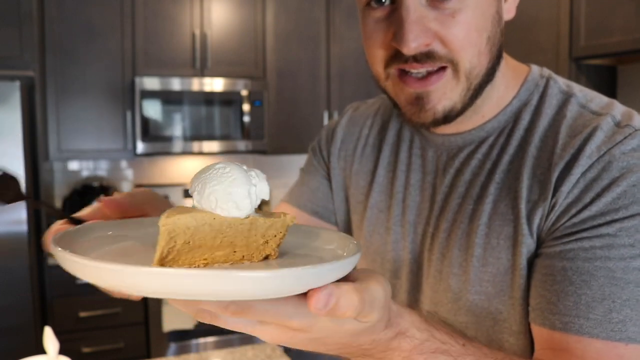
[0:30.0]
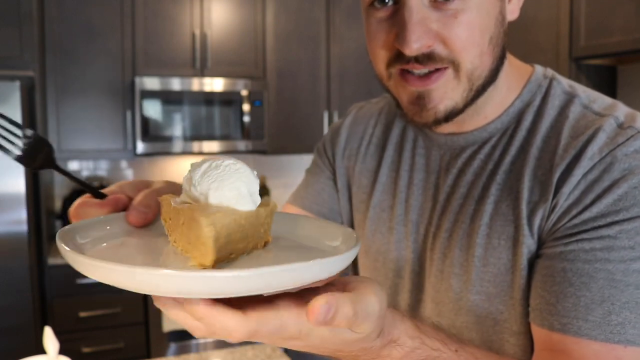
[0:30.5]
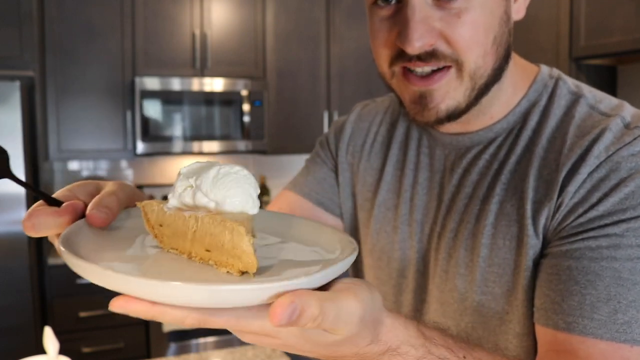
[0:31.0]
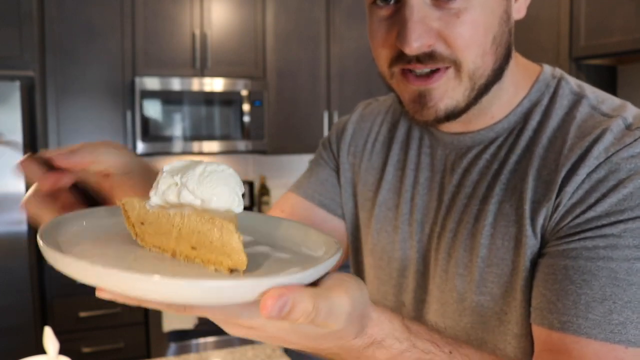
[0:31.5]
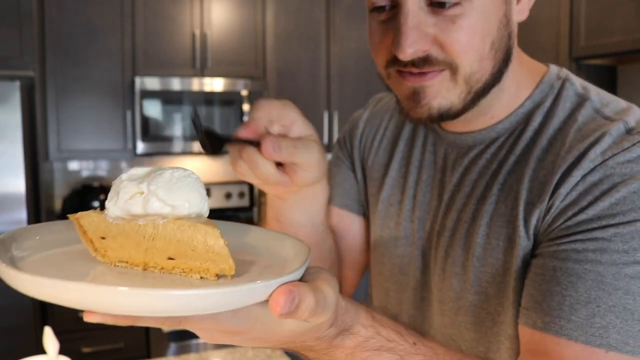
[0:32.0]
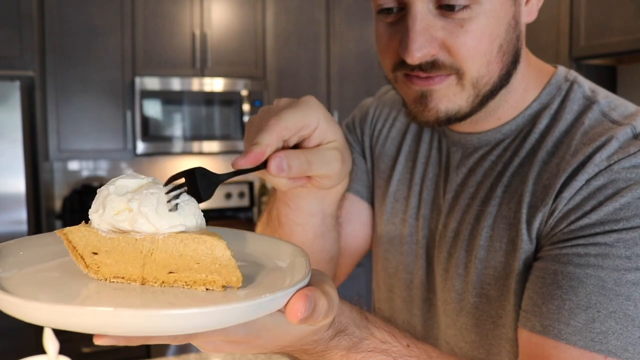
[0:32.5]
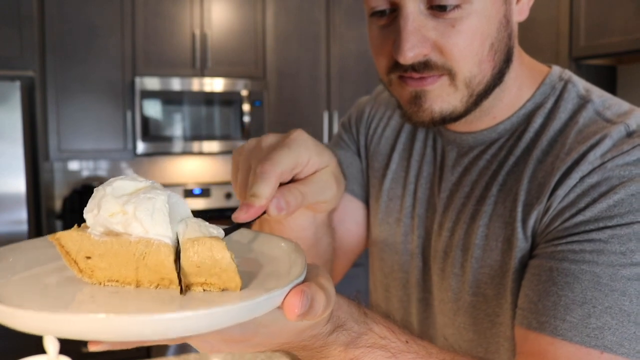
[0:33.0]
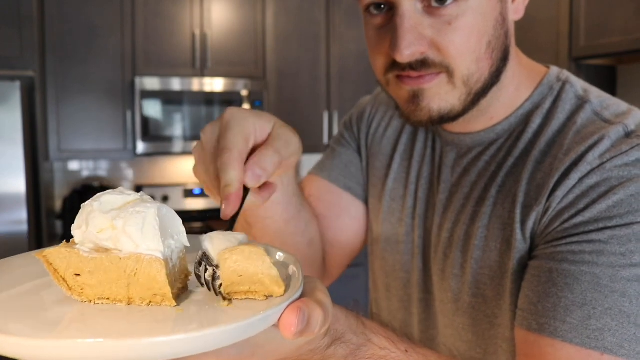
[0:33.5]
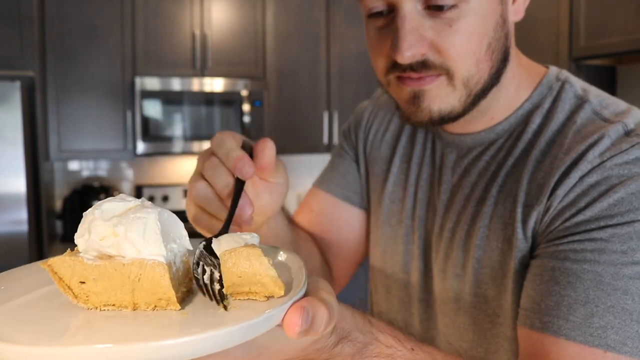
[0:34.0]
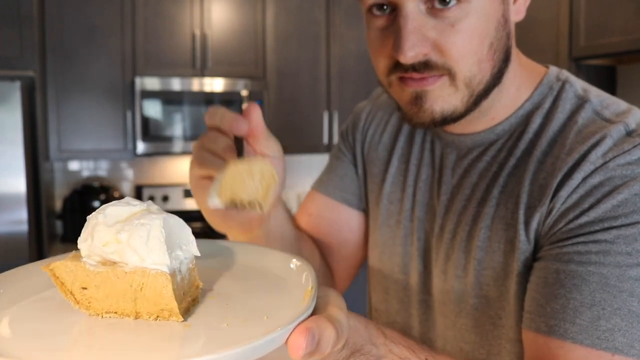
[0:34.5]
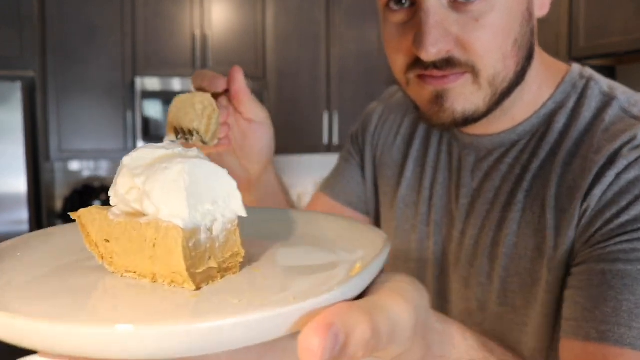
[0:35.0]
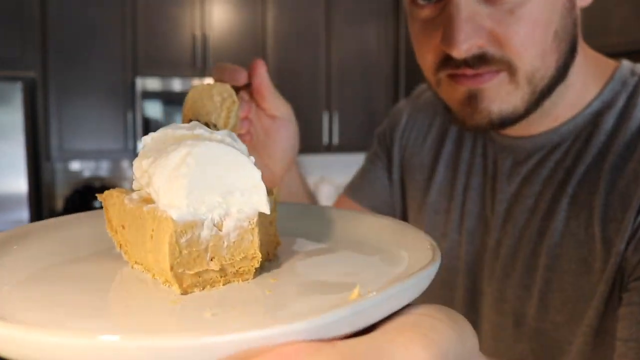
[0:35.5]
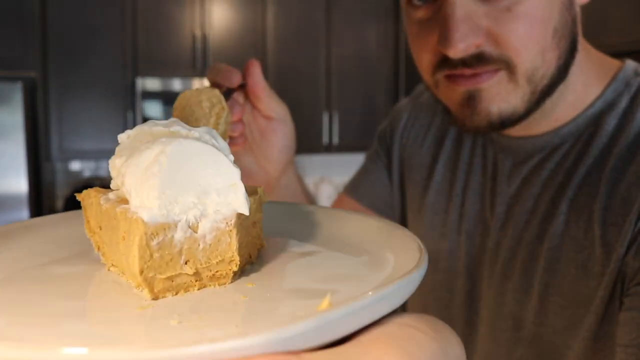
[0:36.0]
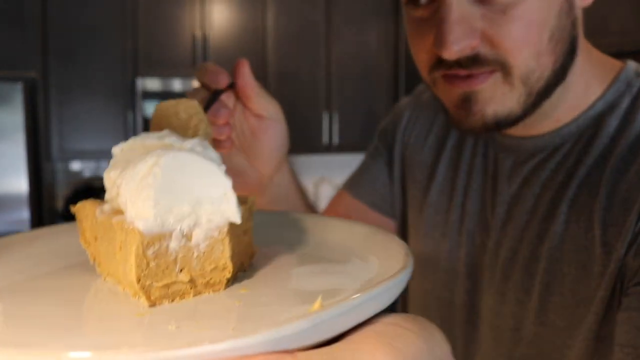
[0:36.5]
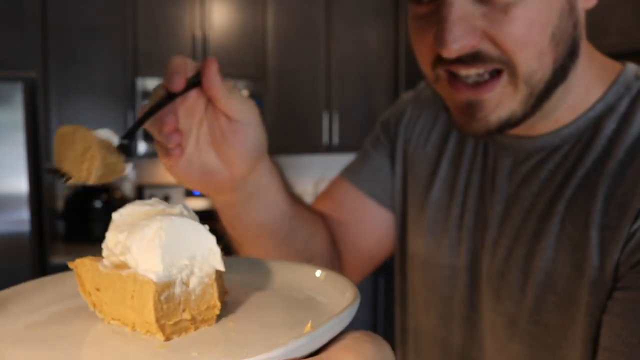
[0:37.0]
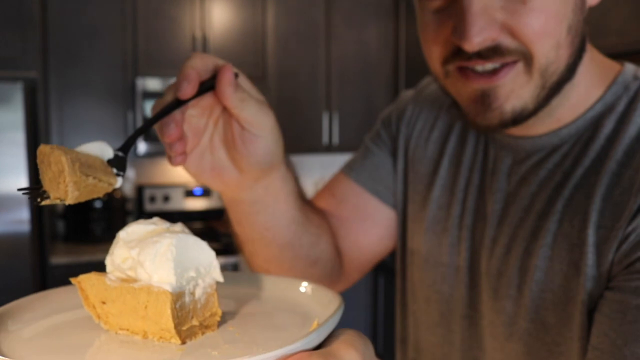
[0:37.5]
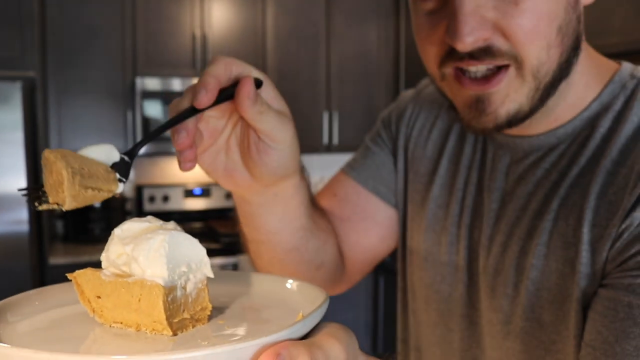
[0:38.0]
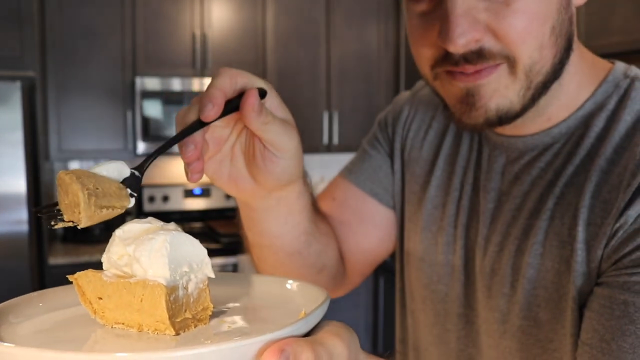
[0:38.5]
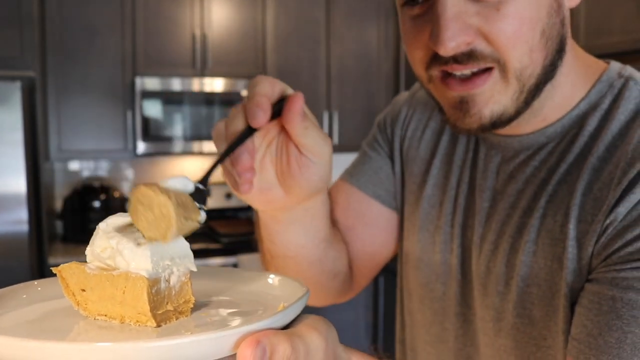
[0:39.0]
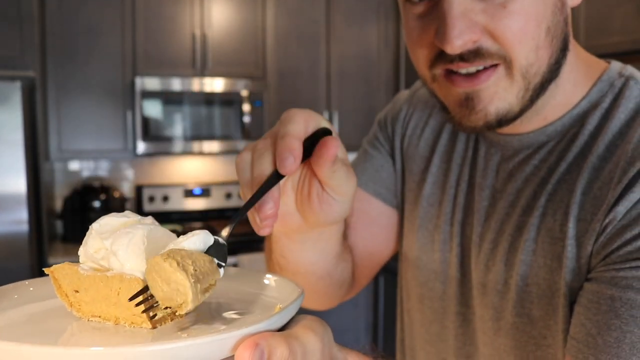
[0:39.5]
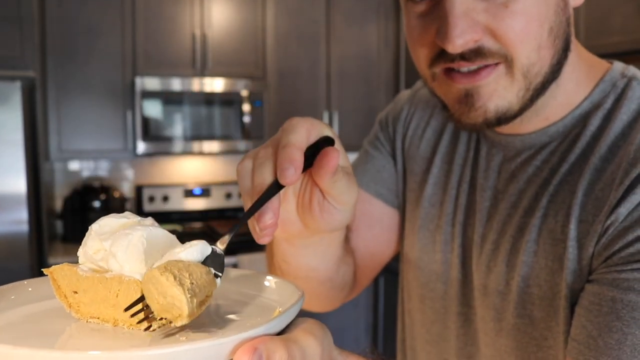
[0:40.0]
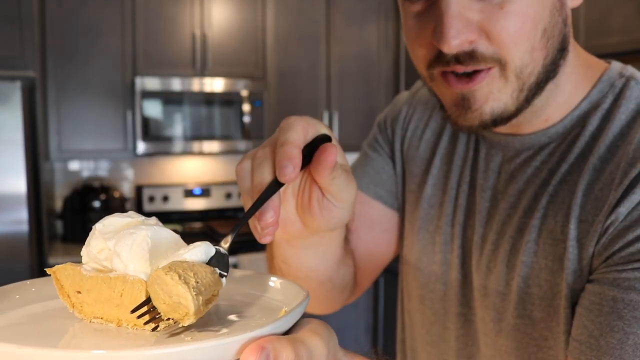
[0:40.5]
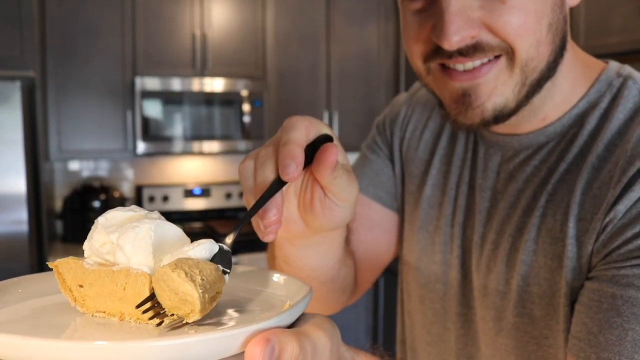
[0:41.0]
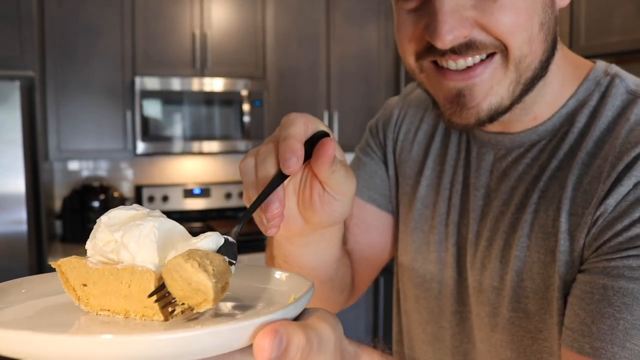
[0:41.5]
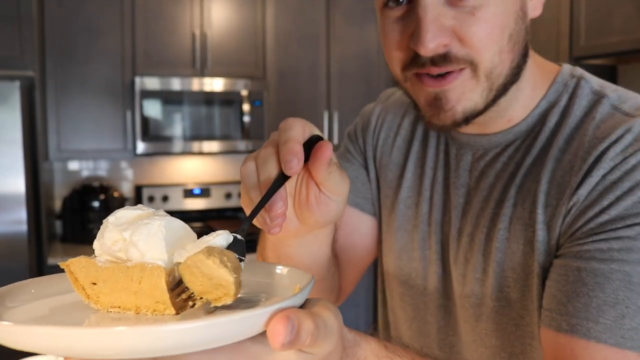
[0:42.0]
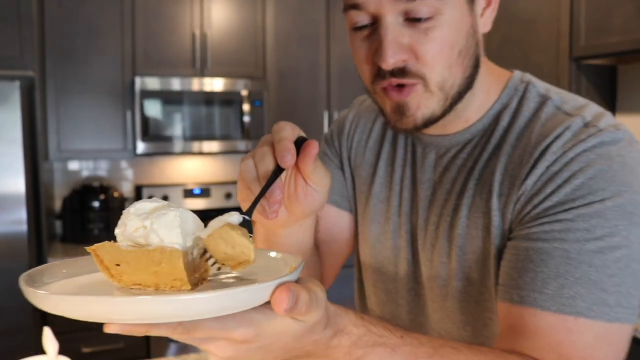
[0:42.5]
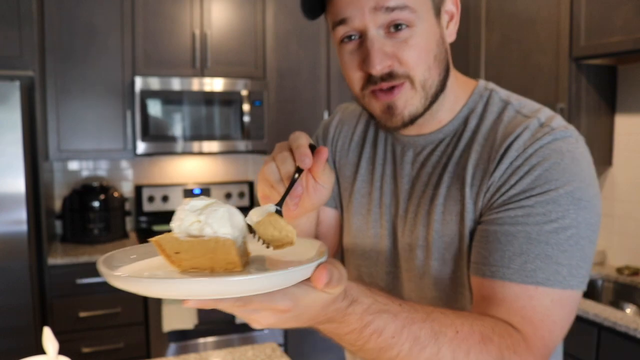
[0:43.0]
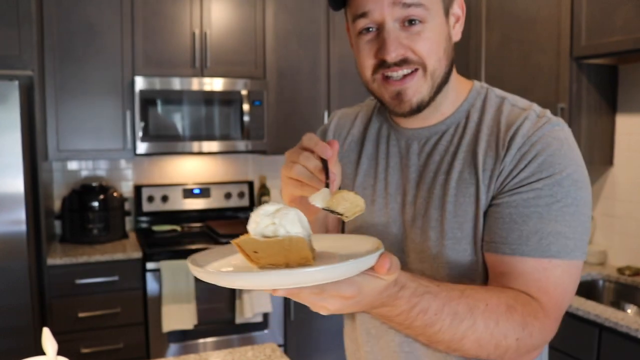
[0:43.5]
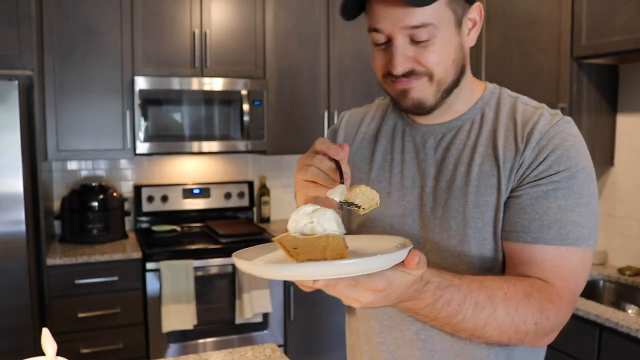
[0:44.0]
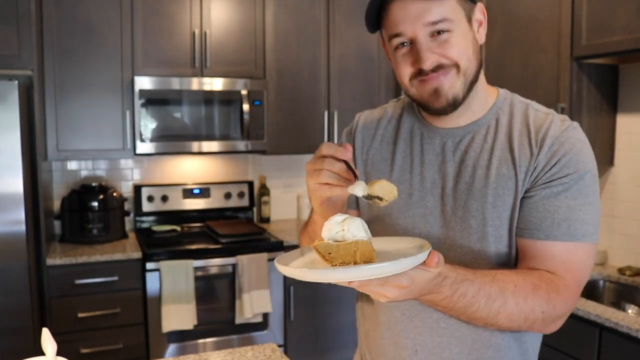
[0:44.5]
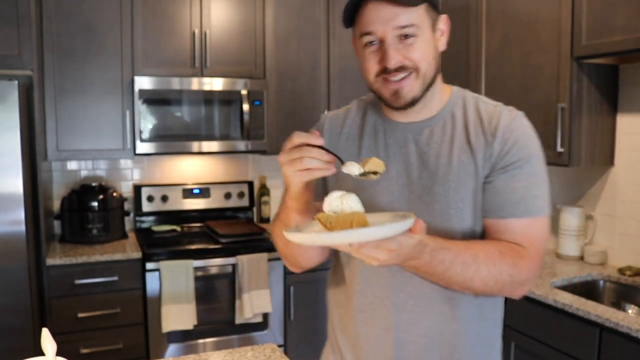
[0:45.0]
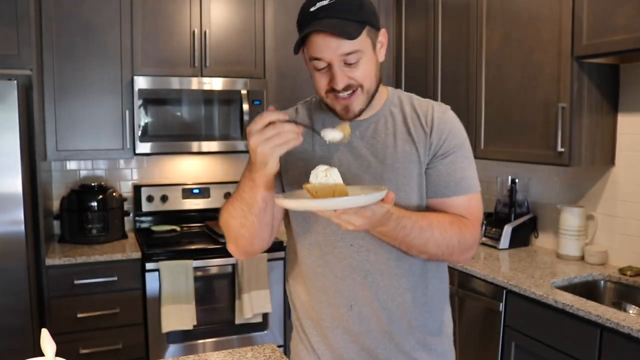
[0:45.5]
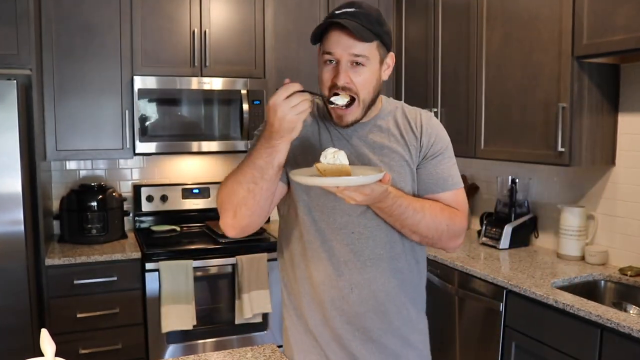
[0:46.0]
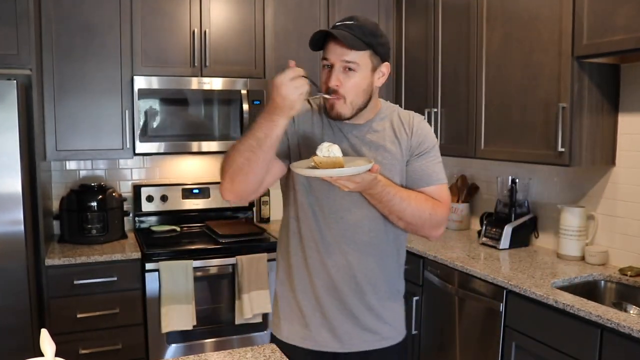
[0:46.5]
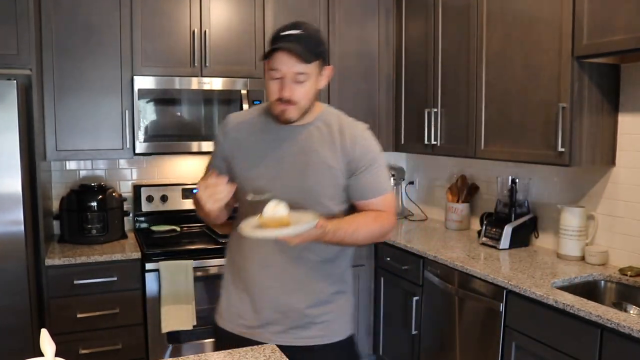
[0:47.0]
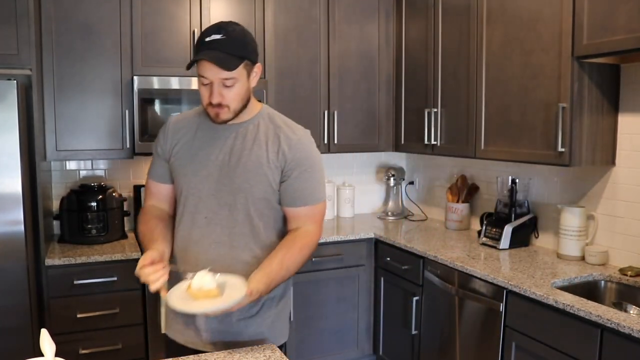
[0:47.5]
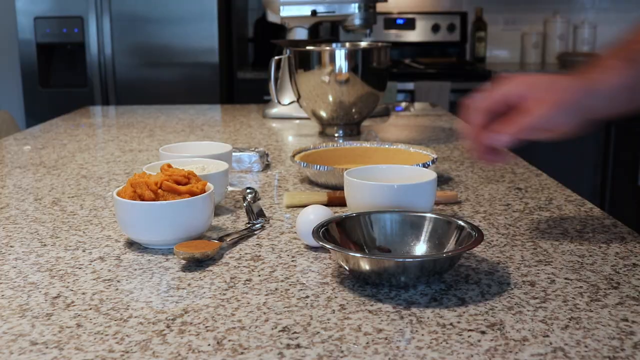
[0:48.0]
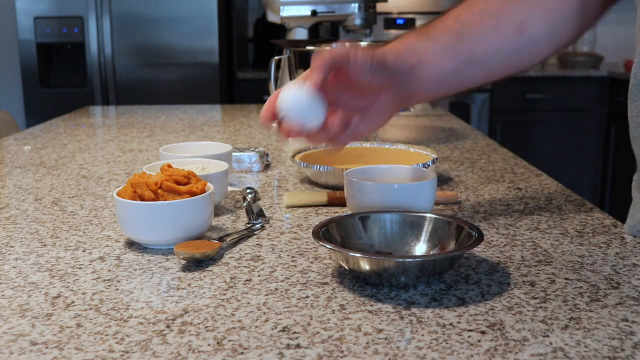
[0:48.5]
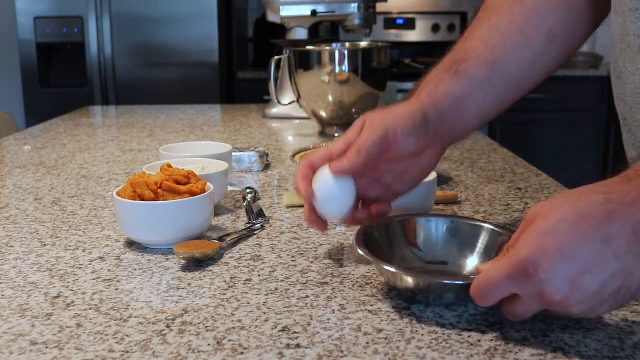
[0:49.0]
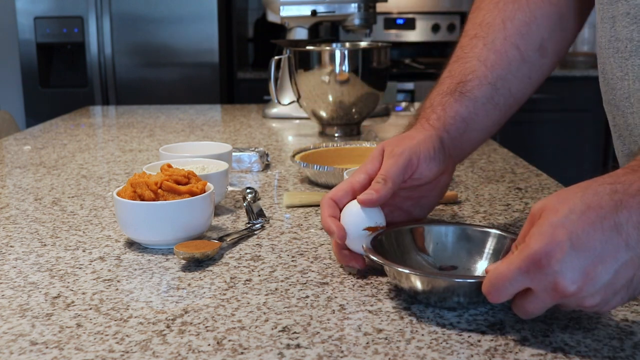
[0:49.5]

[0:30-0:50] The man holds a plate with a piece of pie topped with white cream, along with a black fork. Still in his grey t-shirt, he keeps rotating the pie while the video stays zoomed in on it so it can be seen all around. He cuts a piece with the fork, shows it to the camera, shows the fork to the camera, steps back, takes a bite and puts it down. The scene changes to a countertop holding three white bowls plus another white bowl, two silver bowls, a big silver one, something like a spoon, and eggs.